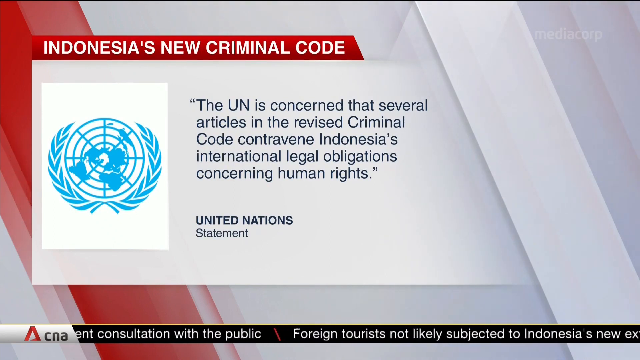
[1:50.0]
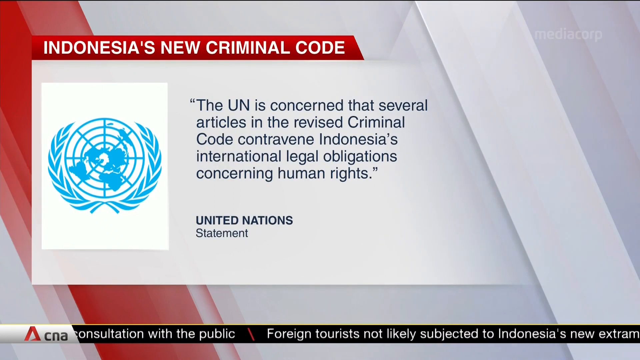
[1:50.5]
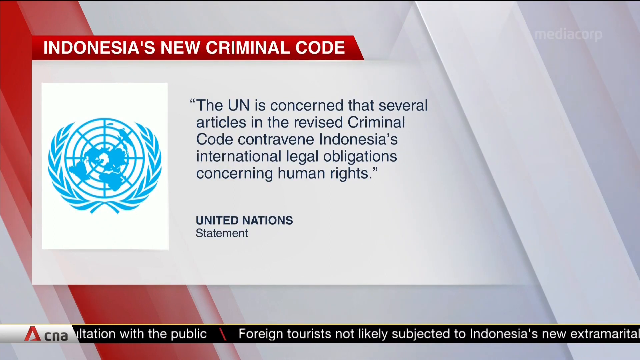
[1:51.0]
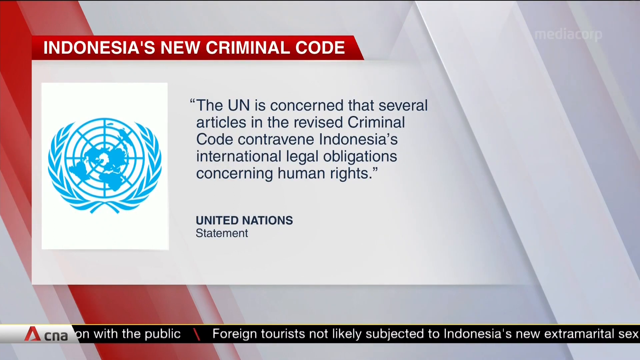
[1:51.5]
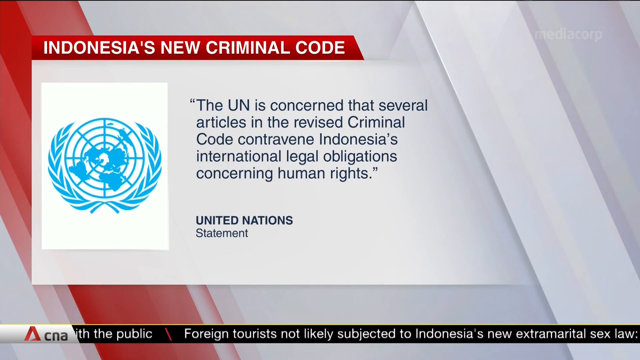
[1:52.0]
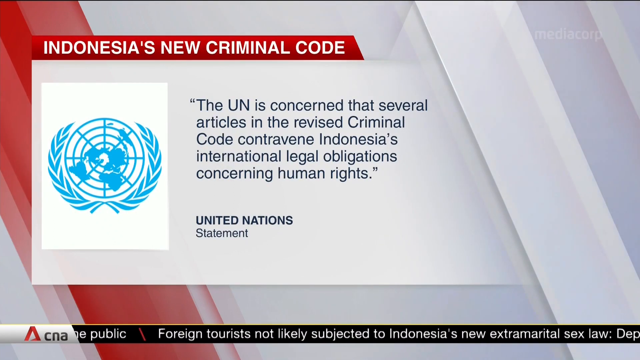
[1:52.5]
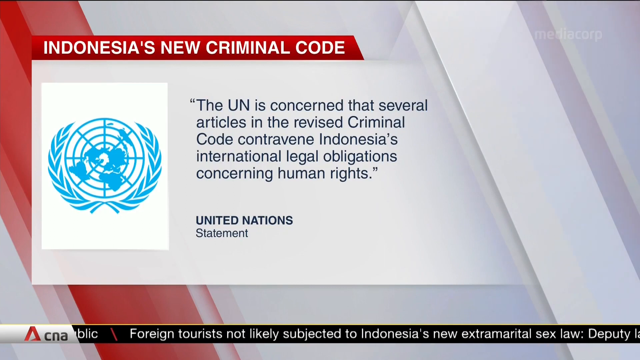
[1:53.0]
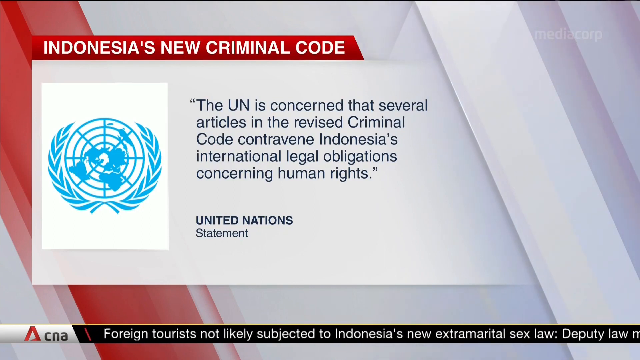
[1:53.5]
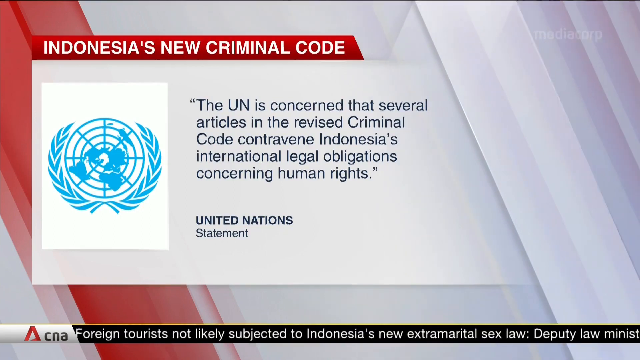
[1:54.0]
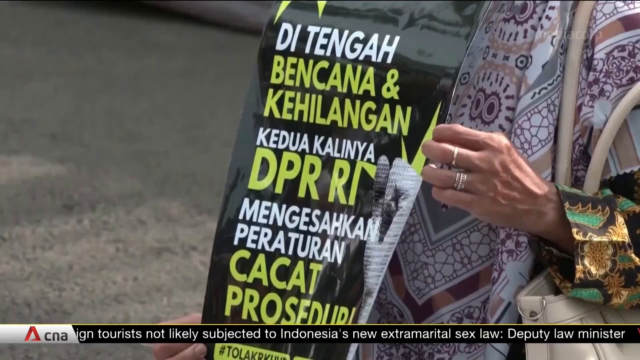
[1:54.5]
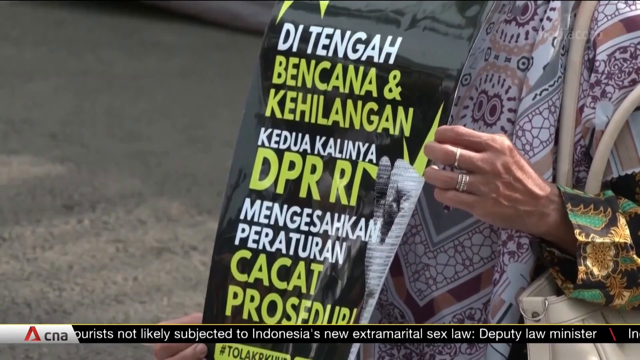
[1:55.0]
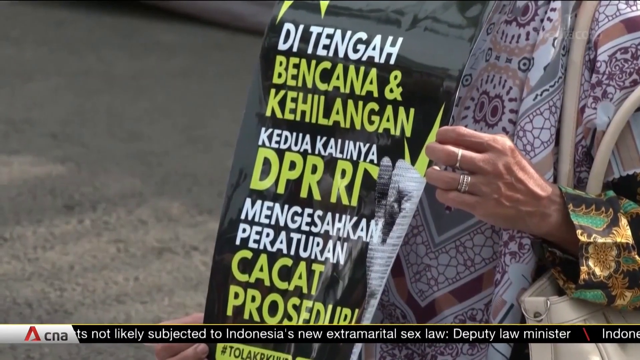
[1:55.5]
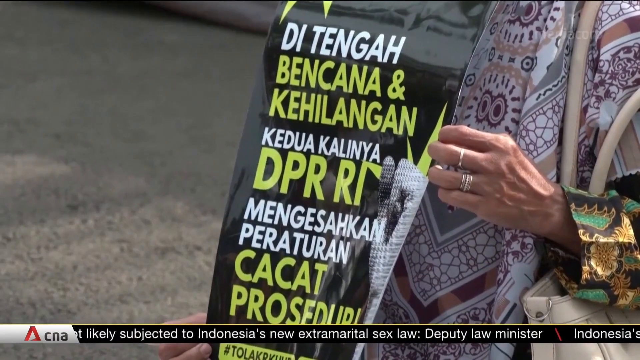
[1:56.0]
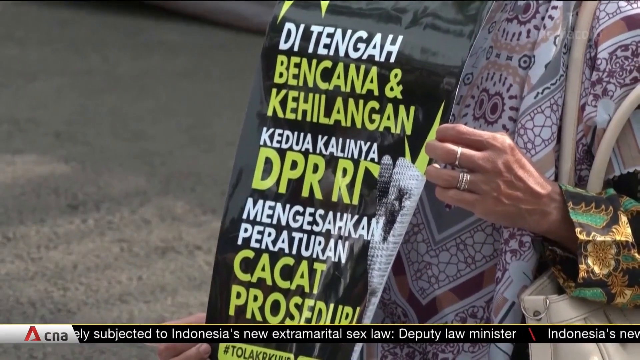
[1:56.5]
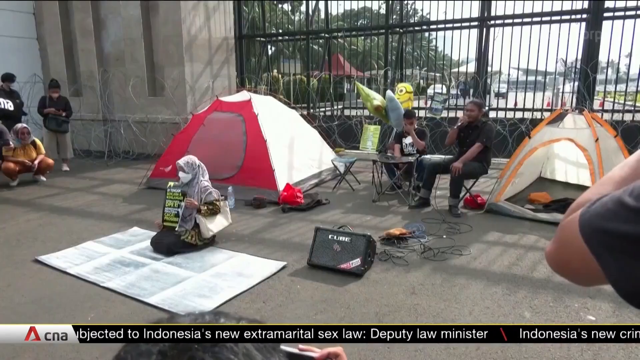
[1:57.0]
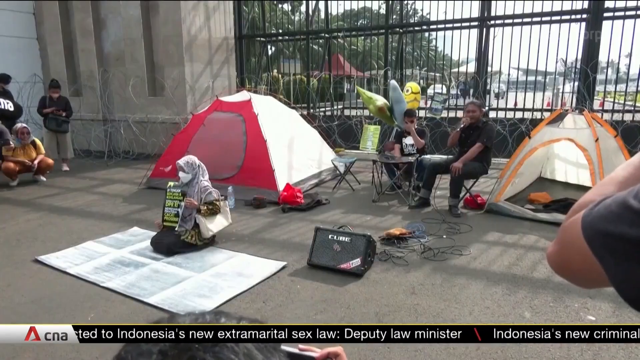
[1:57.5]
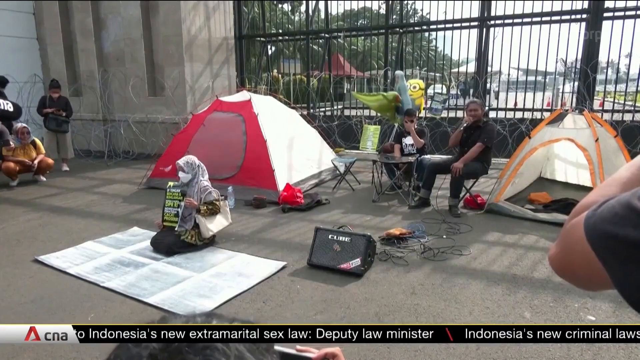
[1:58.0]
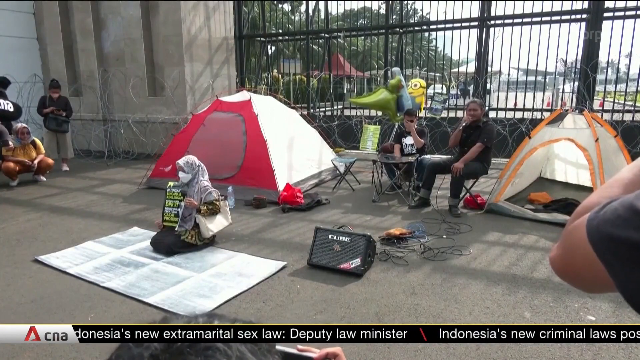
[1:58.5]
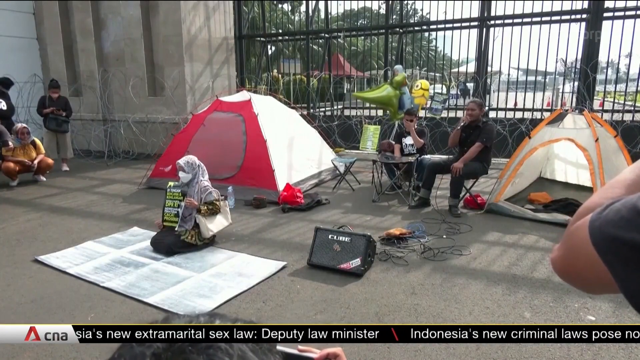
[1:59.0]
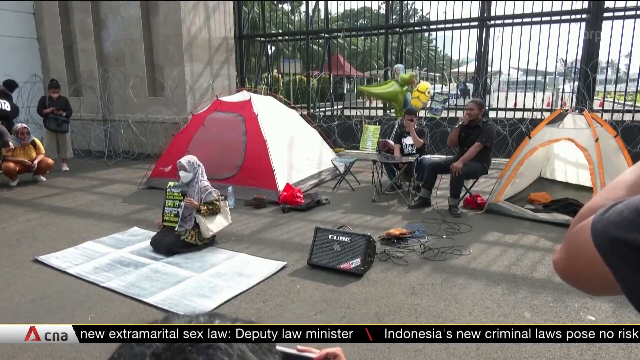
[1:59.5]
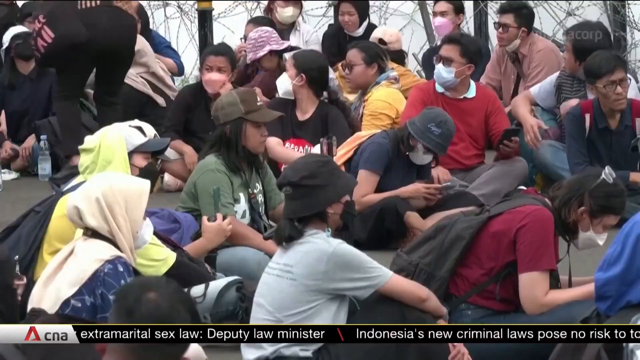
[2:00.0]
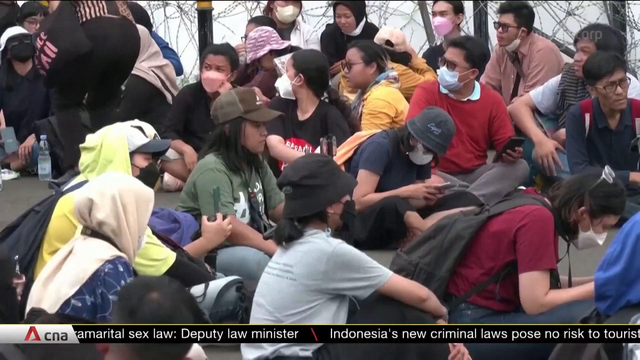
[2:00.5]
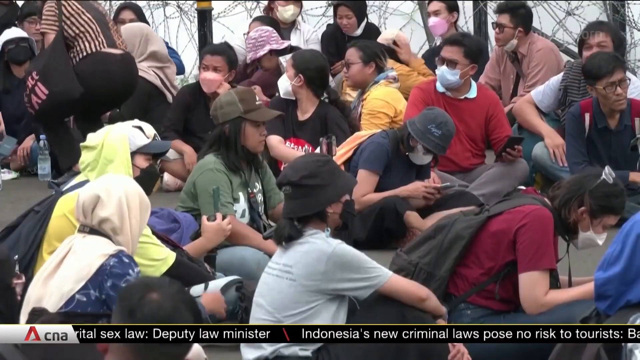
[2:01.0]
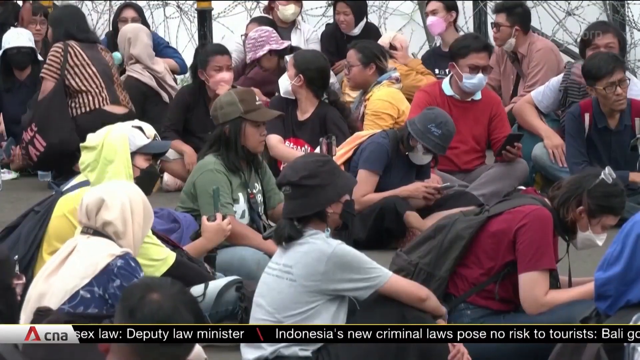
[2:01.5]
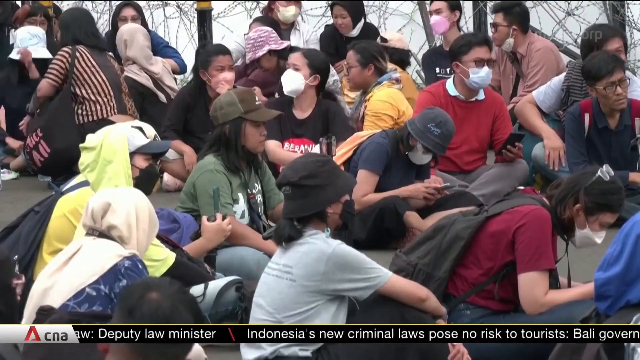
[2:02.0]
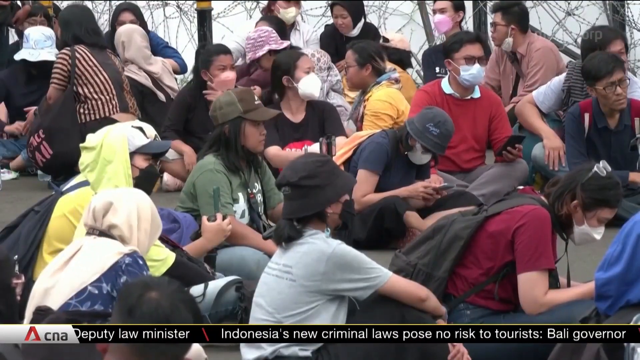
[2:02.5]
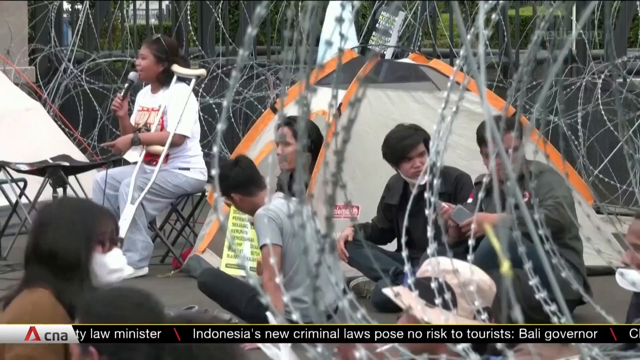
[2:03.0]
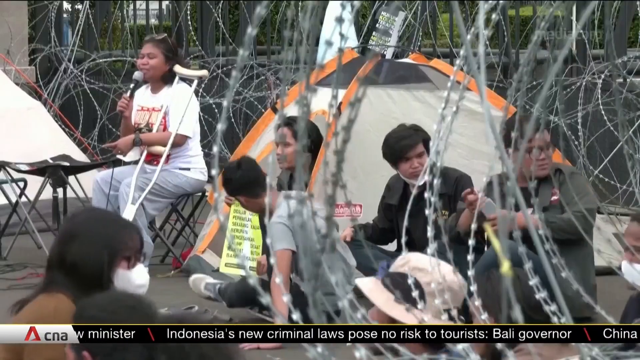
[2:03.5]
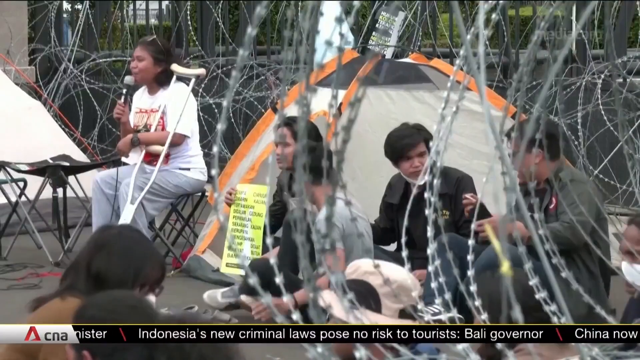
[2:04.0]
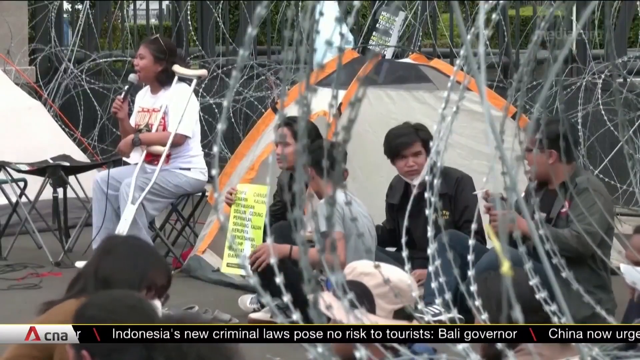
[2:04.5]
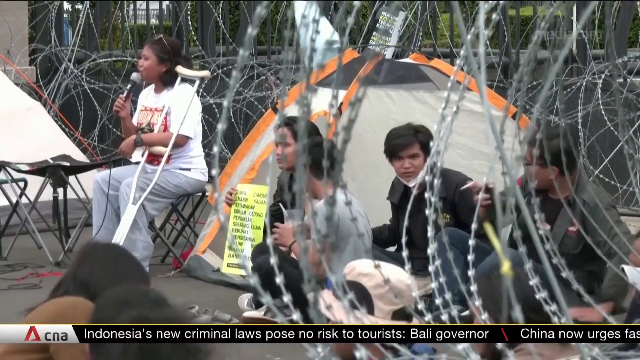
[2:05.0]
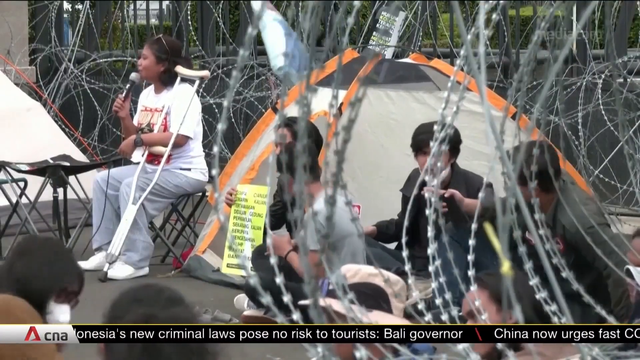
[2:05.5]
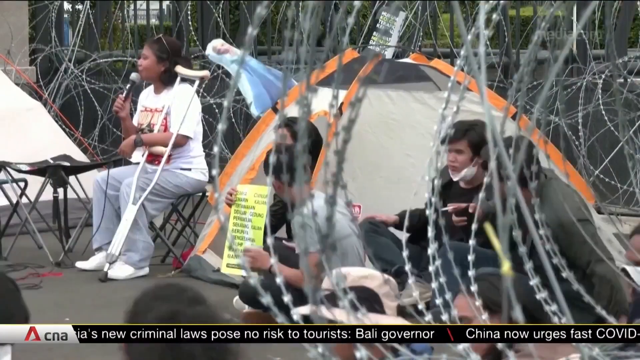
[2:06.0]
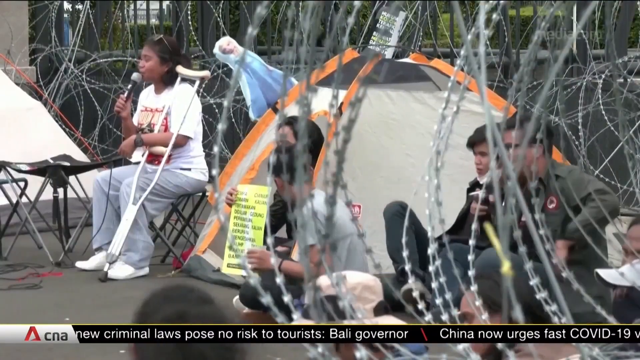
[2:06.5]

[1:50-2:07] Text reads "the UN is concerned that several articles in the revised criminal code contravene Indonesia's international legal obligations concerning human rights." A blue logo, apparently the United Nations logo, appears with "United Nations" and "statement" at the bottom. A woman then holds a black poster with green and white writing in a different language on a street. Several people sit in the street outside two tents, a red one and an orange one. A woman has a towel down, two people are at a desk, one person sits in front of a tent and three sit to the side. Inside a tent are objects such as a yellow sweater and black pants. Next to the woman is a black object that looks like a radio, with "cube" on it. They sit in front of what looks like a black pole.